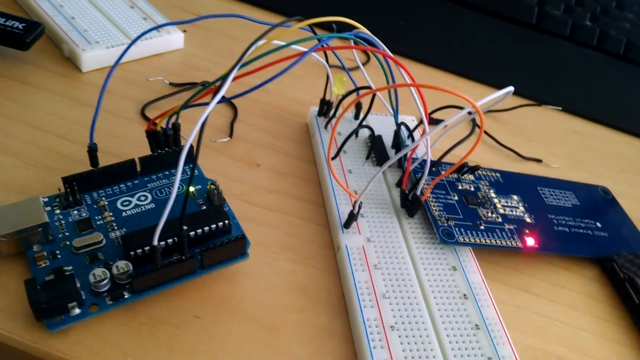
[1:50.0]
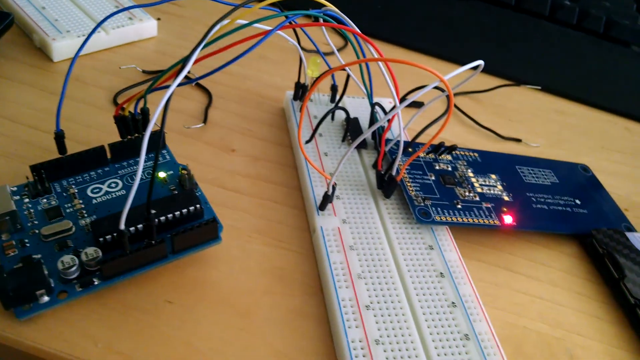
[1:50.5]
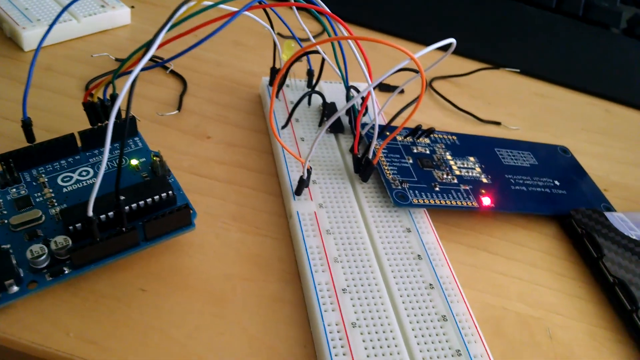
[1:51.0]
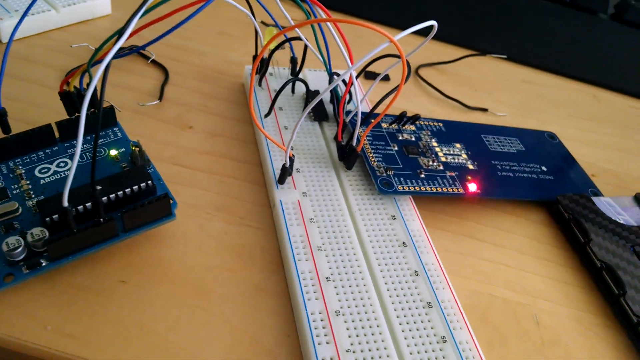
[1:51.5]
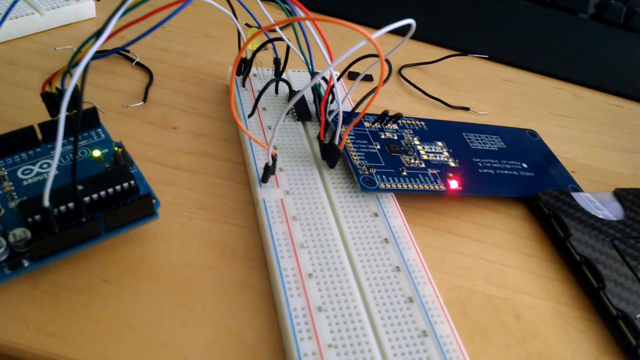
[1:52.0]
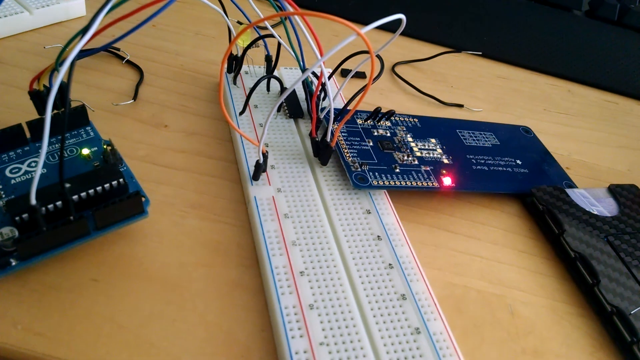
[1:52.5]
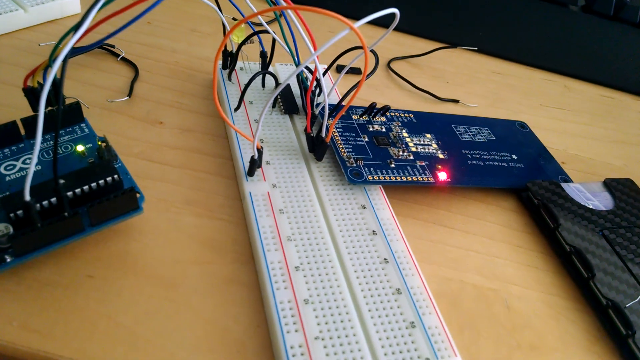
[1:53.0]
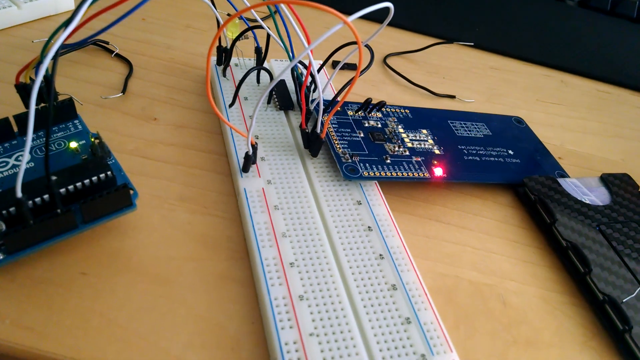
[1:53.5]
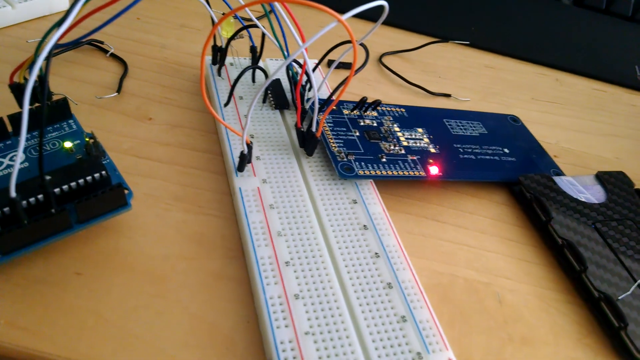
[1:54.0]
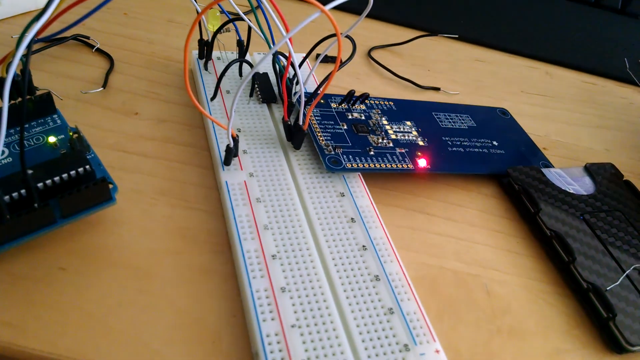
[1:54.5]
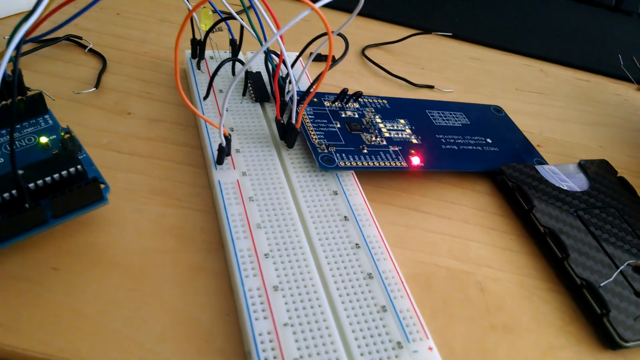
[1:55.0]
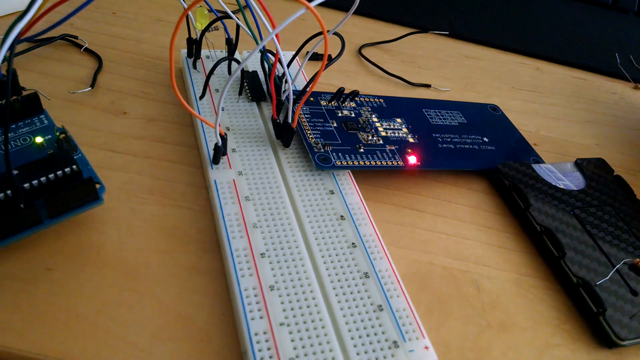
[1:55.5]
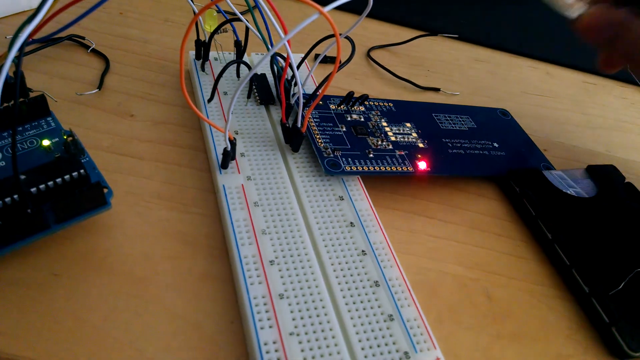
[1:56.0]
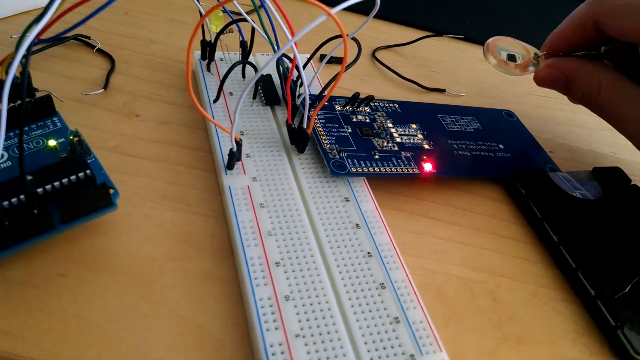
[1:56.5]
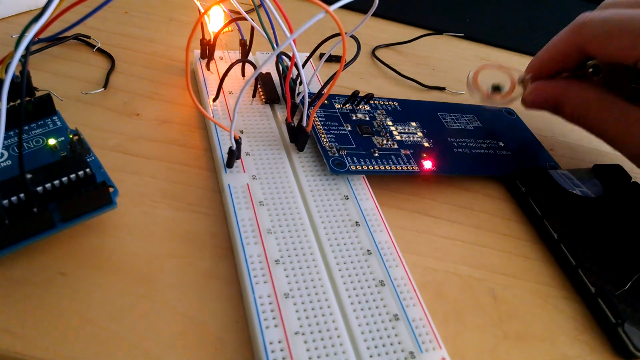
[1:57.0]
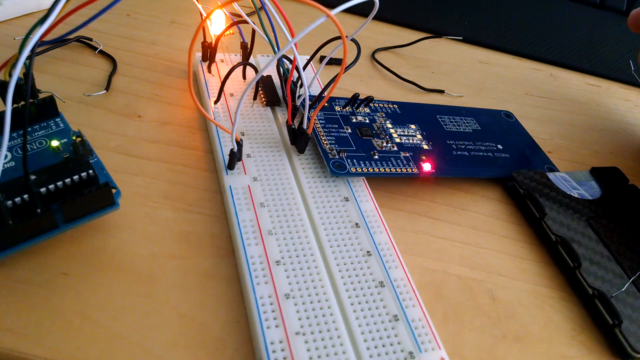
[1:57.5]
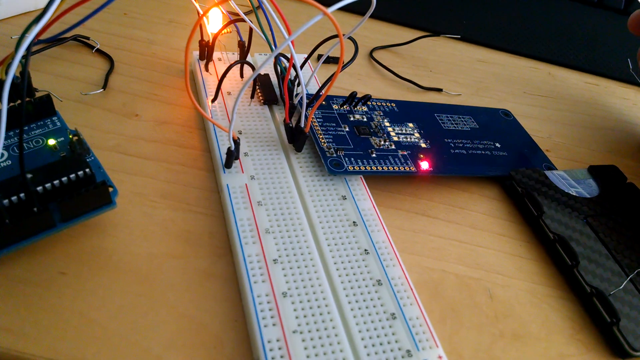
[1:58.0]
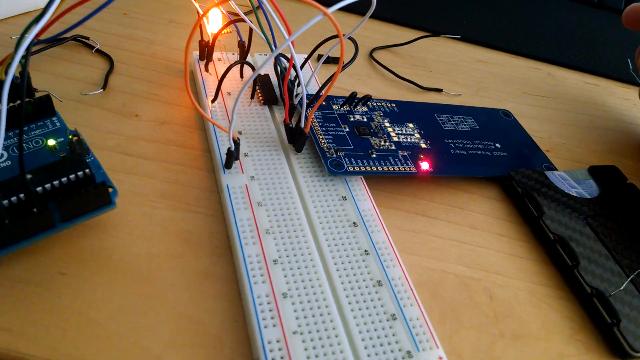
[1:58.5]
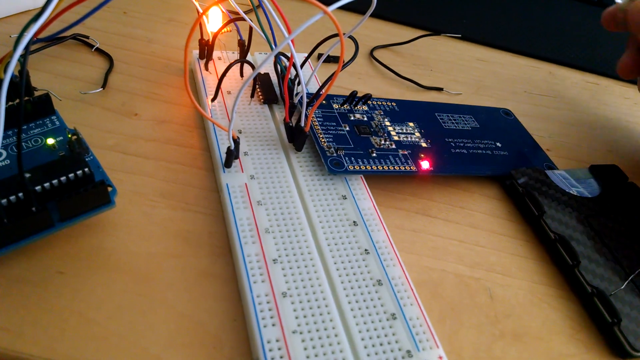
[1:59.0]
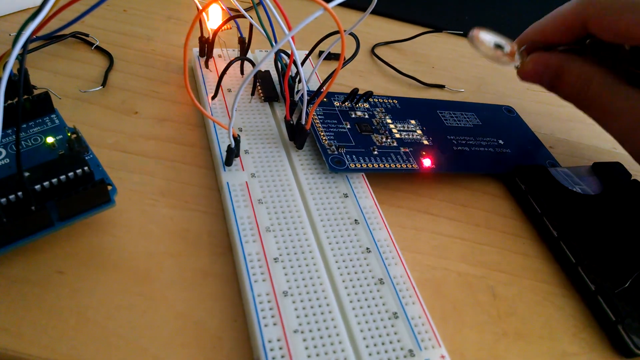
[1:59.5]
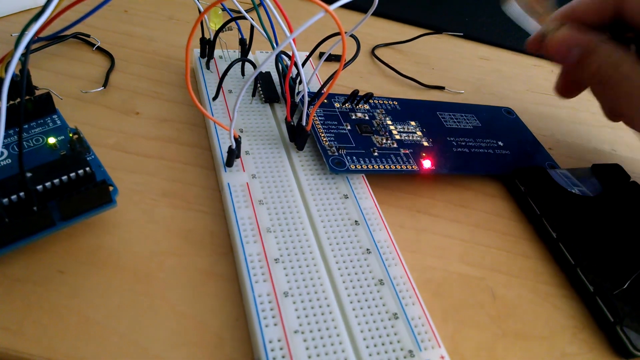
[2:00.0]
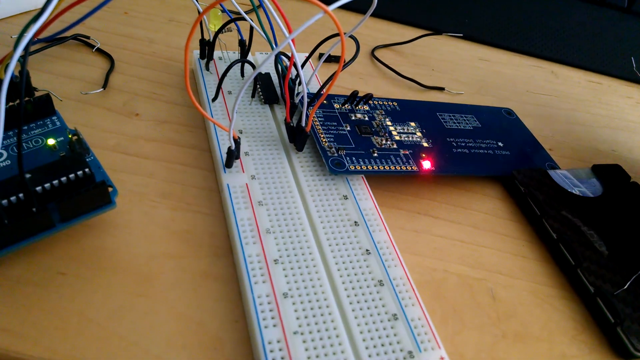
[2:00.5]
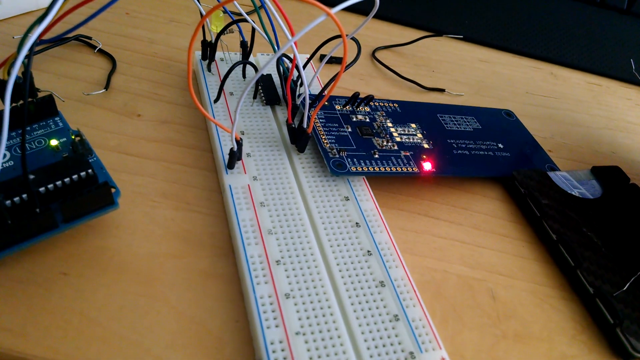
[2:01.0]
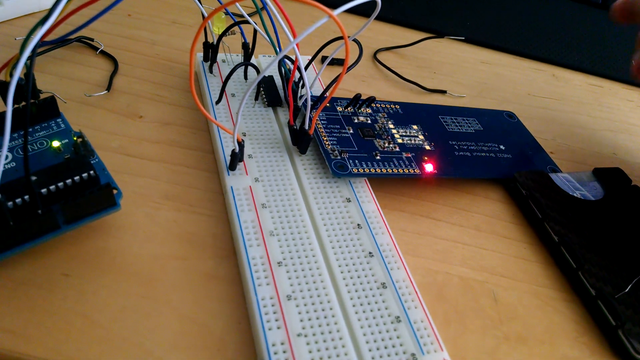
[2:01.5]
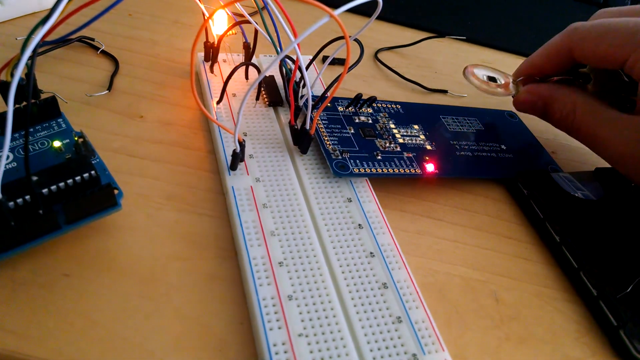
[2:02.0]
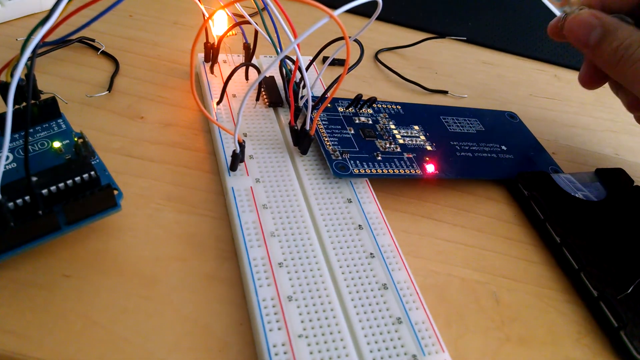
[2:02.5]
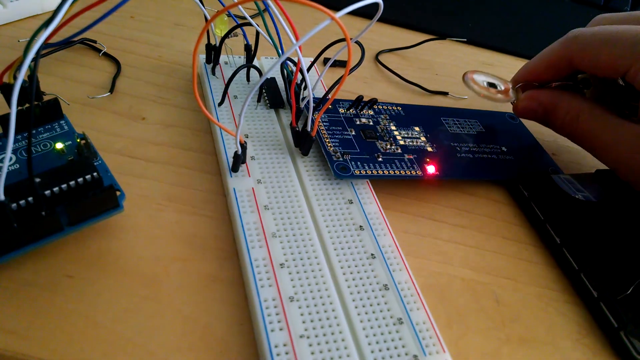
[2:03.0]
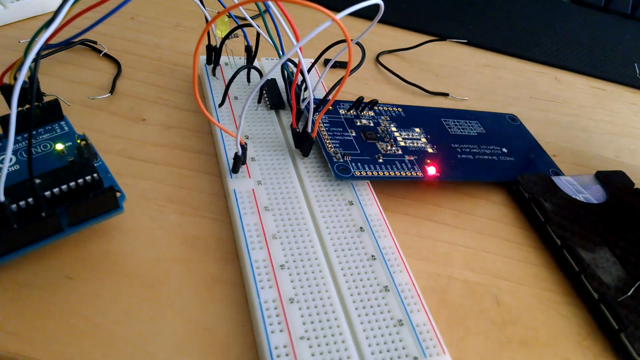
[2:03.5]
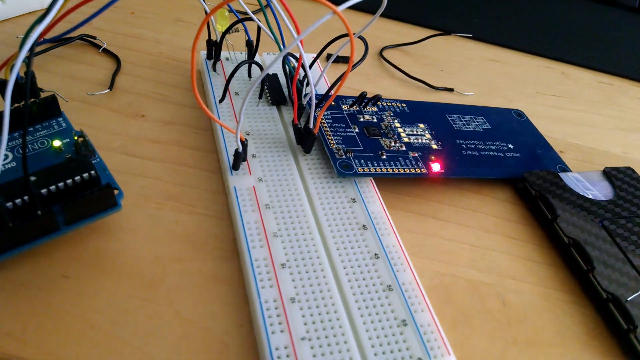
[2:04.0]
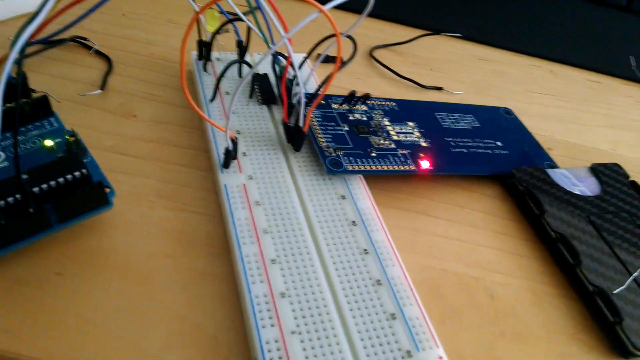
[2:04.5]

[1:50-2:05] The person continues looking at the device on the desk. When they put down the clear part of the keys, the device itself reacts, not just the screen: a light bulb attached to the giant white part glows very brightly each time he taps it.